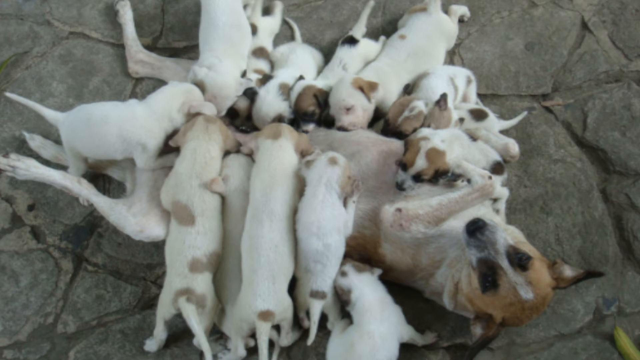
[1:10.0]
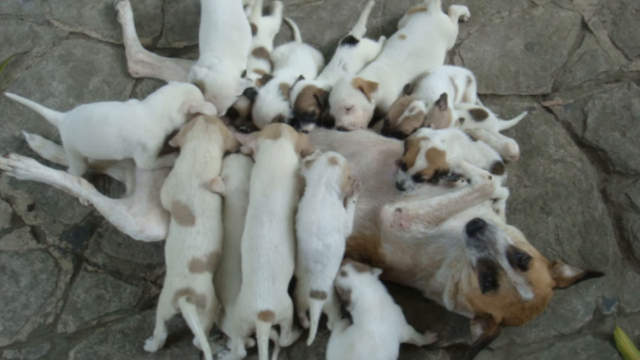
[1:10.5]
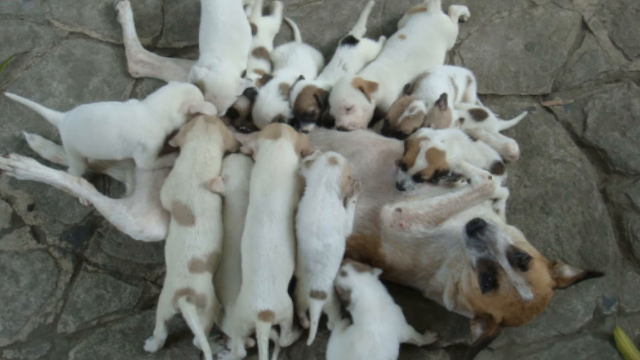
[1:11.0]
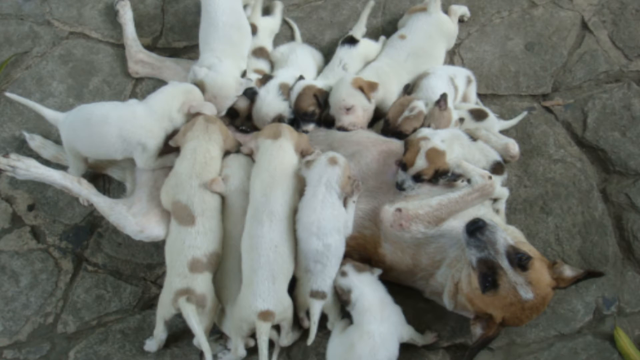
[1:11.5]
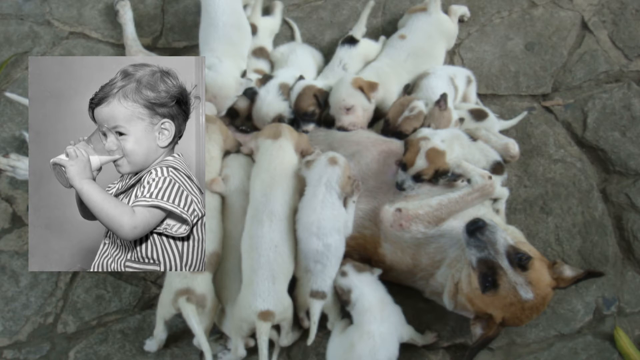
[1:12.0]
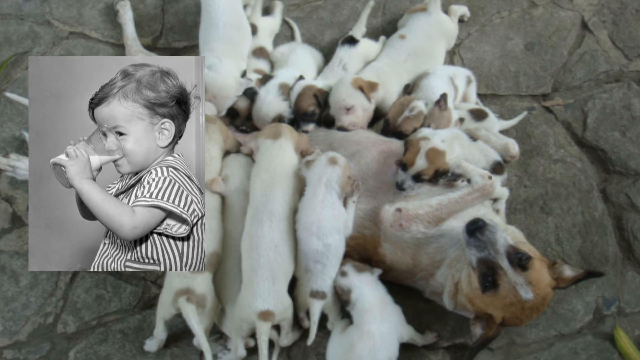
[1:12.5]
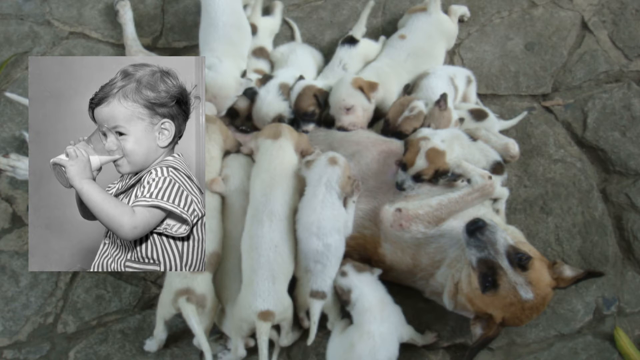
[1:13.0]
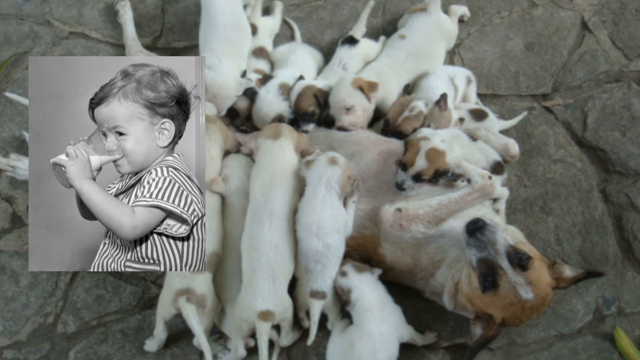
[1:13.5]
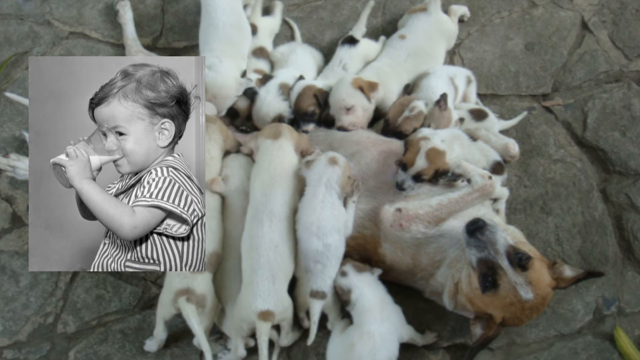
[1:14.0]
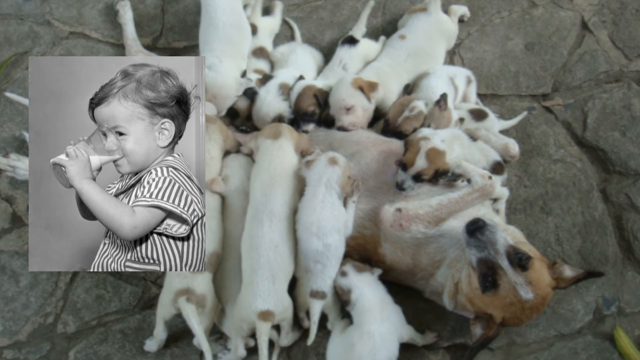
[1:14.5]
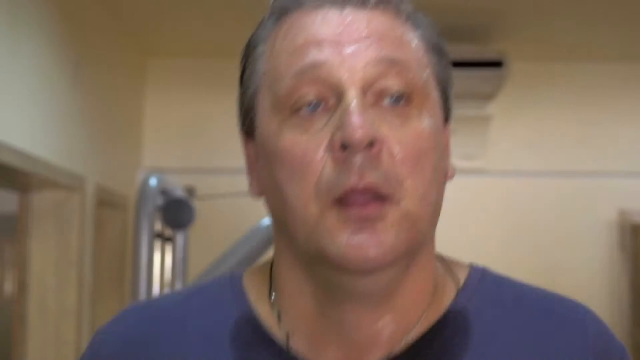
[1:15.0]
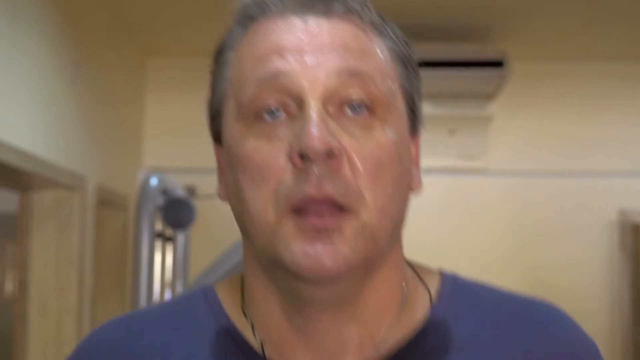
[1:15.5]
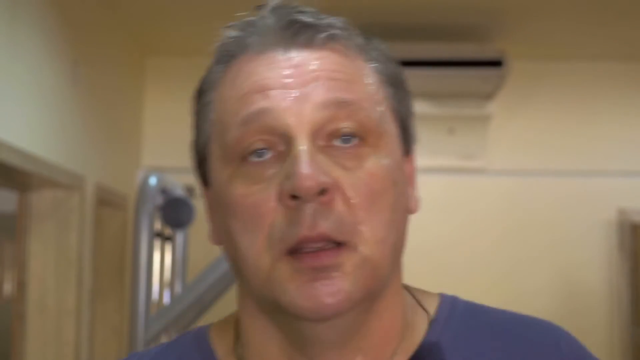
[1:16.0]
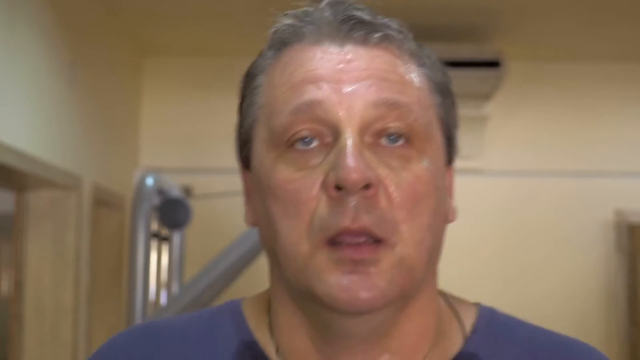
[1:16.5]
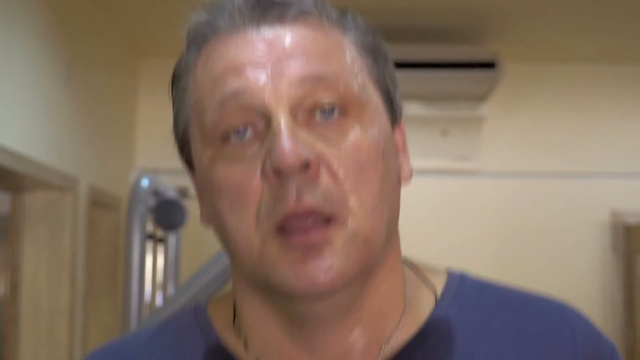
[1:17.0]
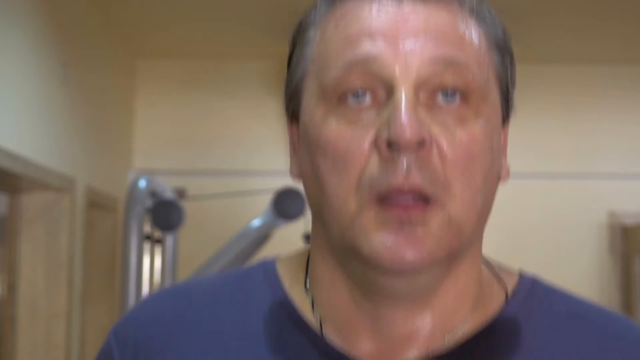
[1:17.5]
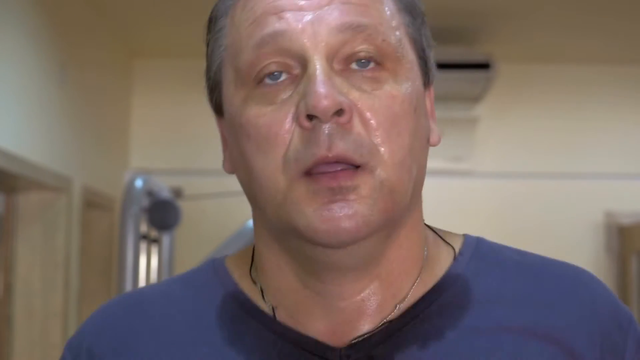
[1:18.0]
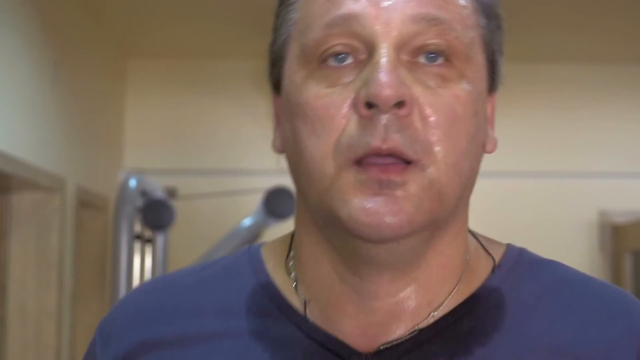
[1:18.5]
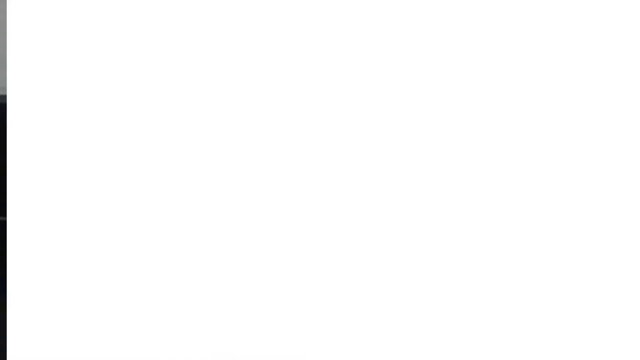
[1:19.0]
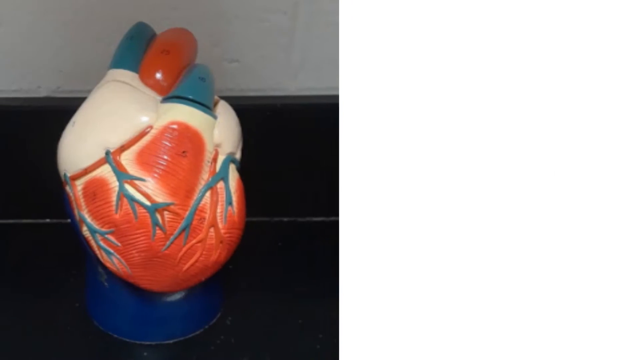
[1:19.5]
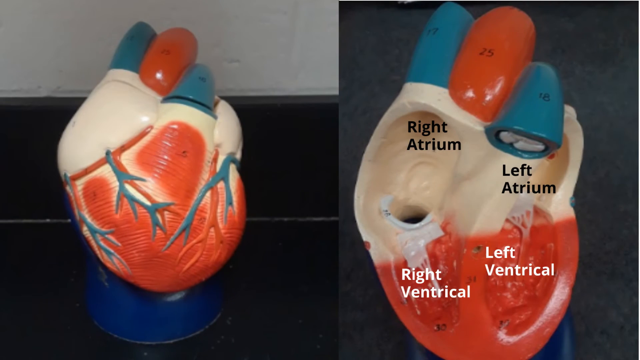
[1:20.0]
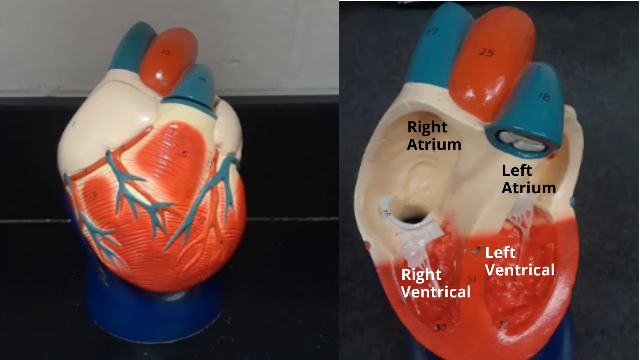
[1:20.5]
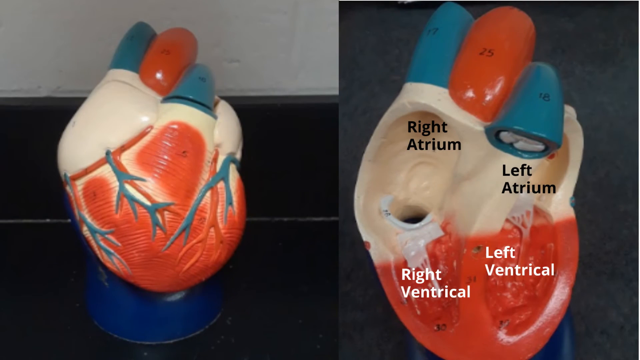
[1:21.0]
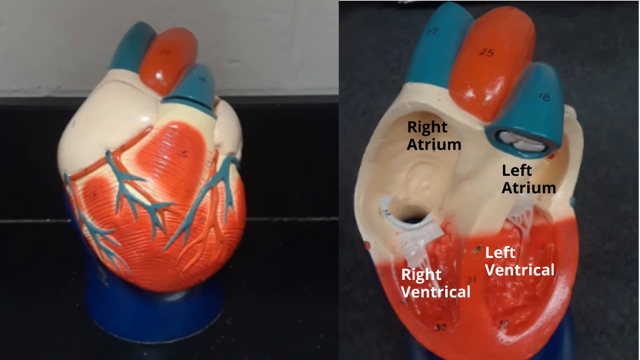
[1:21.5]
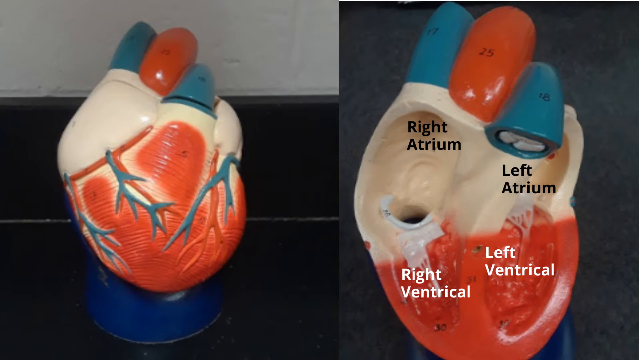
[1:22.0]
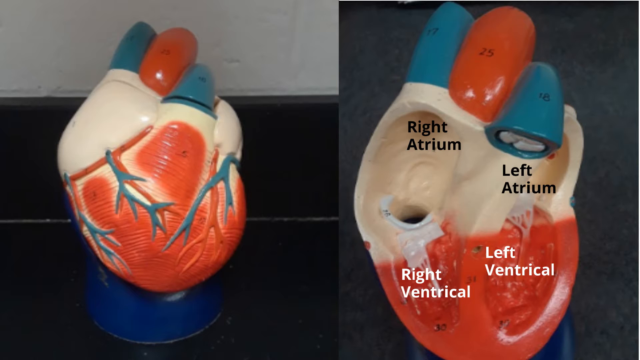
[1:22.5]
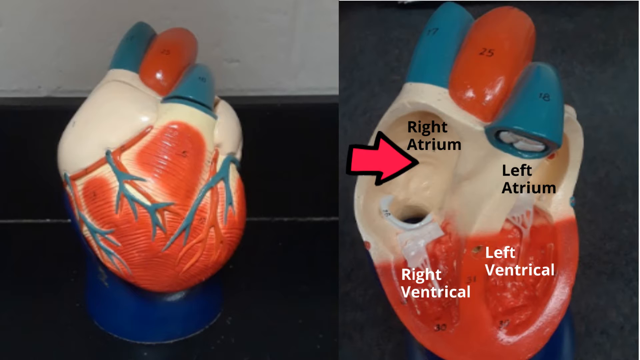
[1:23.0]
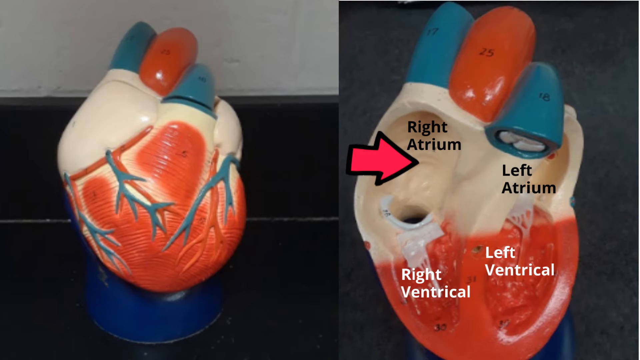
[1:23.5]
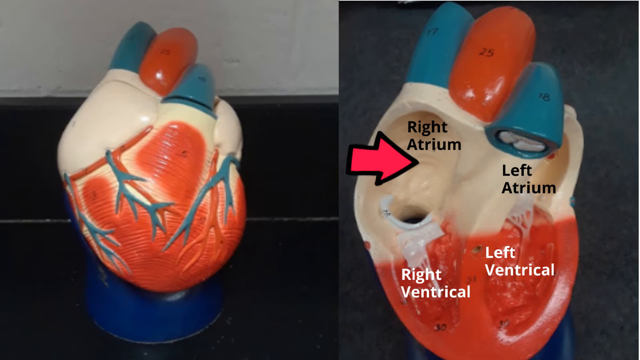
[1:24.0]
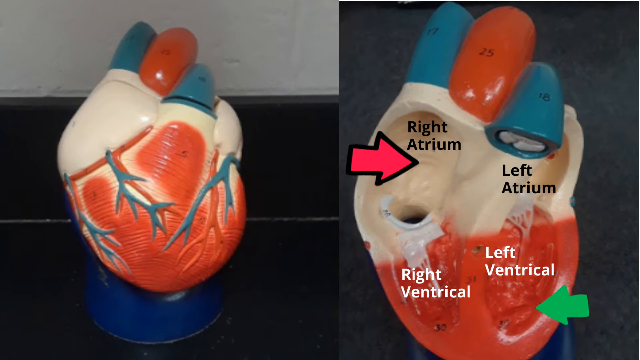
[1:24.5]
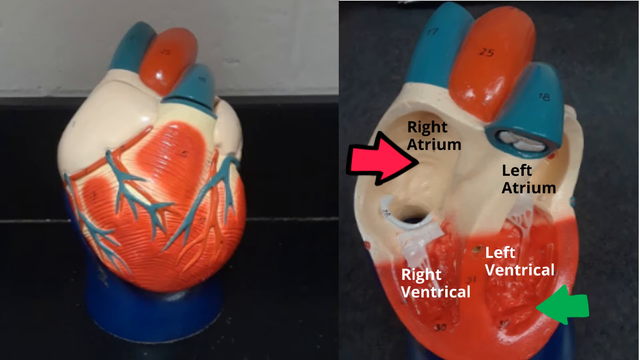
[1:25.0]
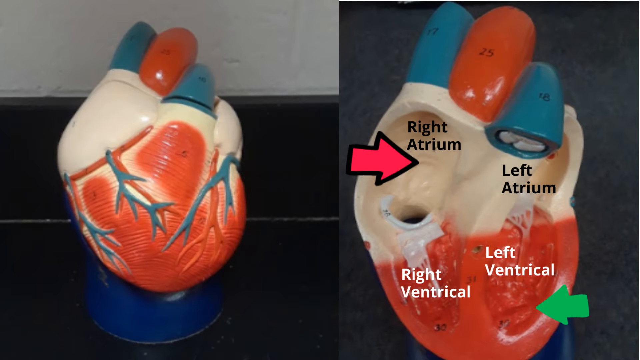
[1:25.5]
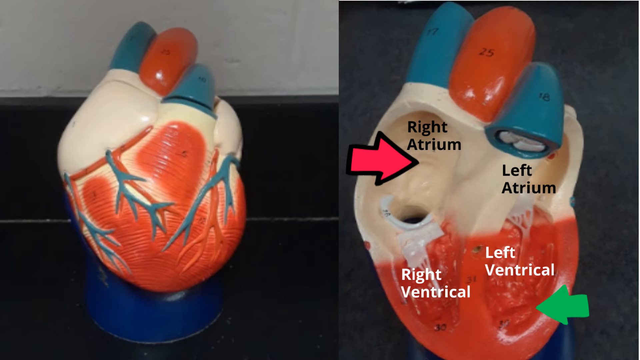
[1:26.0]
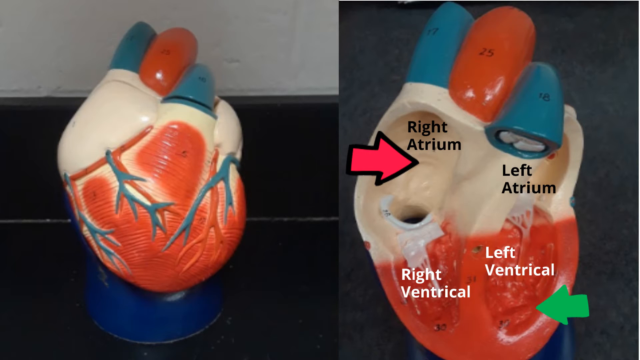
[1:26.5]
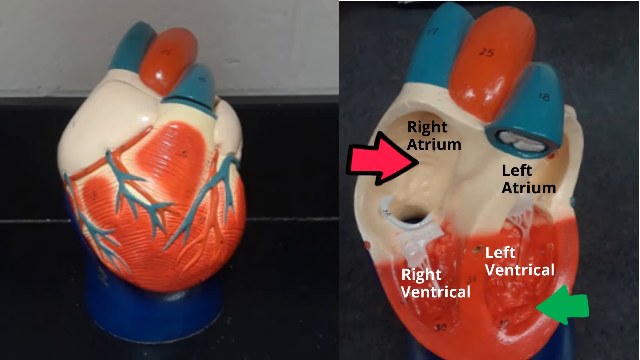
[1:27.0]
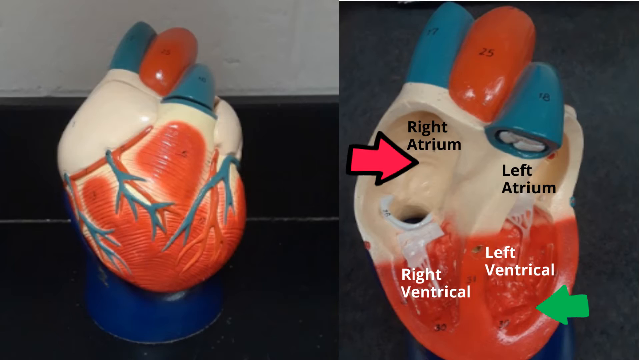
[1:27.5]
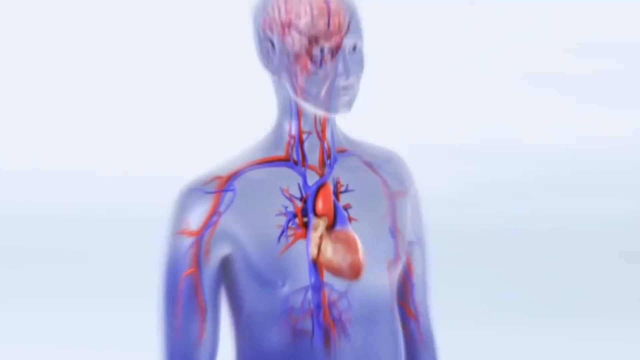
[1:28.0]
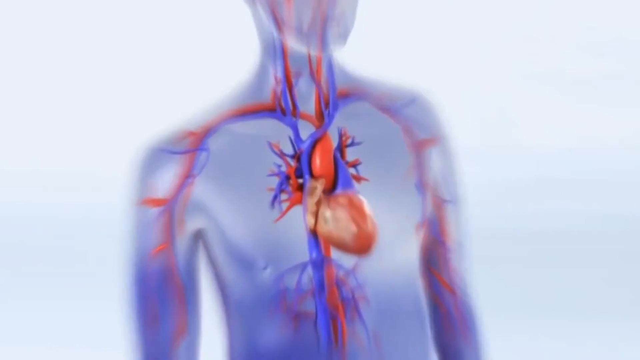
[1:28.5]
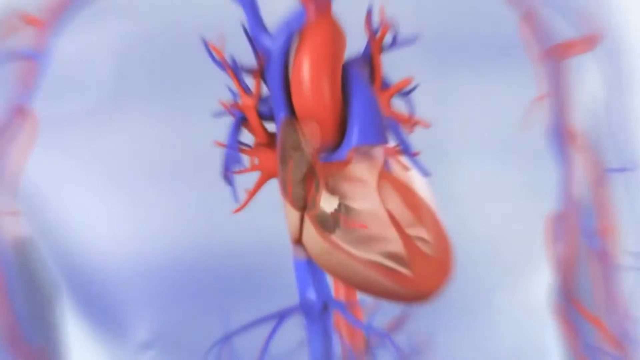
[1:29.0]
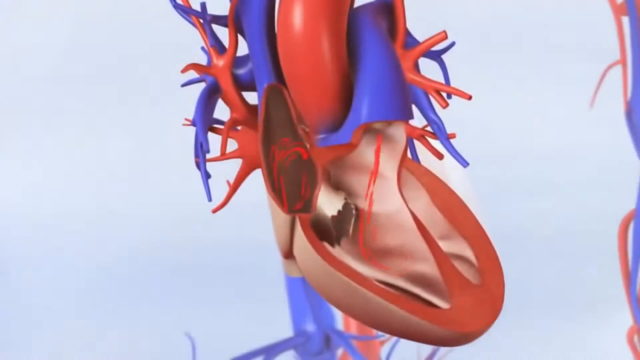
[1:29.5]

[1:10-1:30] The pups all seem to be breastfeeding. The dog's breed is unclear. The pups are white with smaller patches of brown and black, and the mother is mostly light brown. A picture shows a boy drinking milk from a glass, wearing a black and white t-shirt. A man works out on a treadmill, sweating. A heart then appears, showing its inner structure: the right atrium, left atrium, left ventricle and right ventricle. Blood flows from one side of the heart to the other.